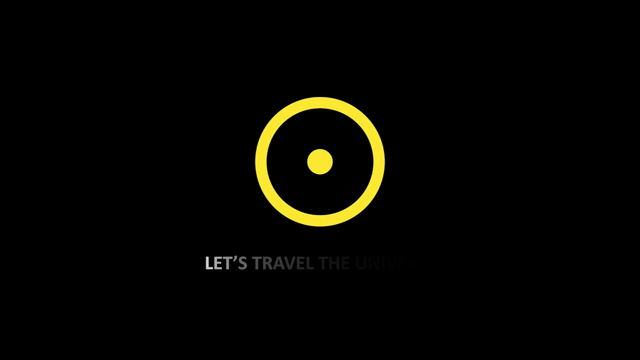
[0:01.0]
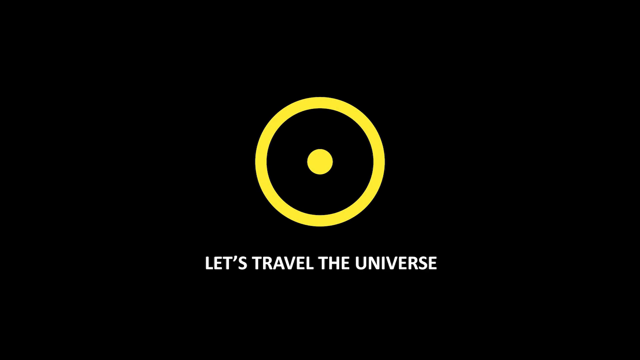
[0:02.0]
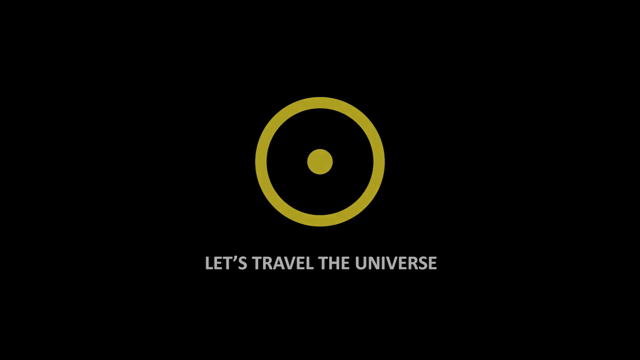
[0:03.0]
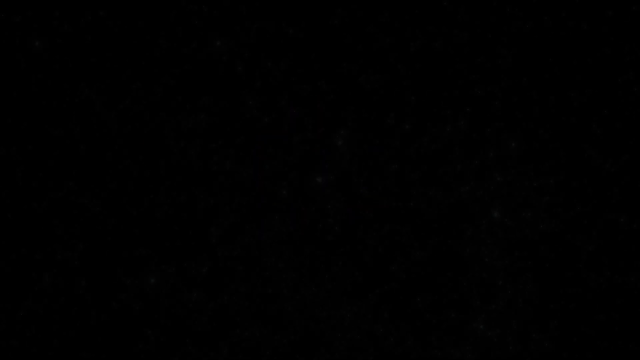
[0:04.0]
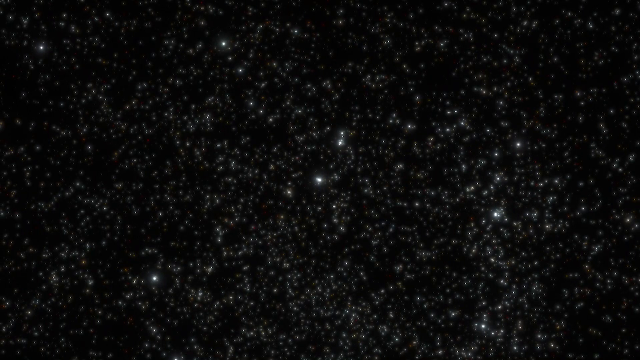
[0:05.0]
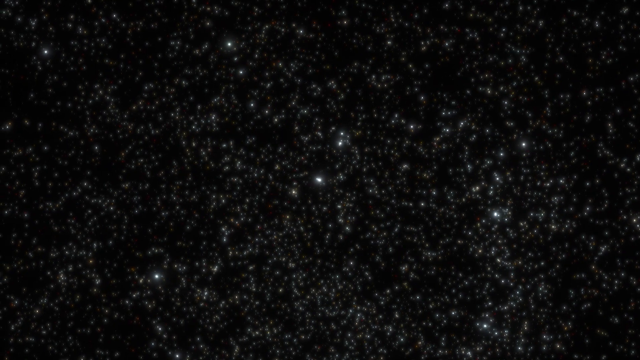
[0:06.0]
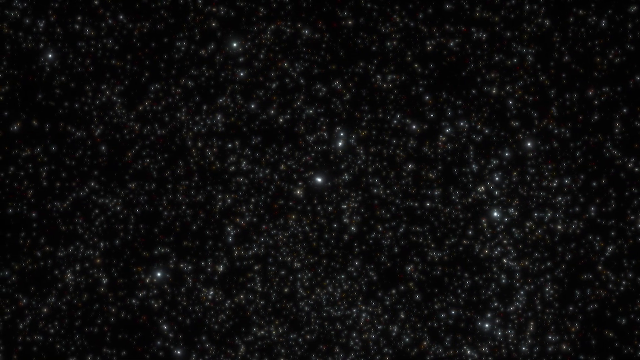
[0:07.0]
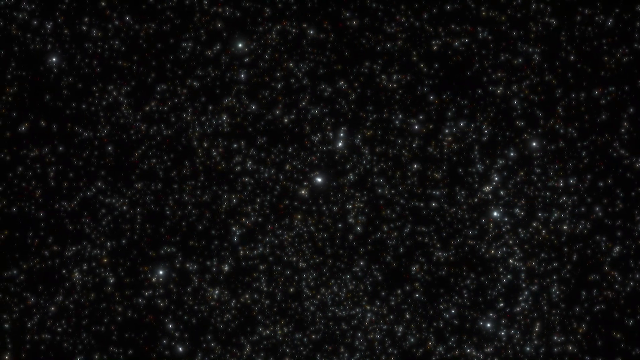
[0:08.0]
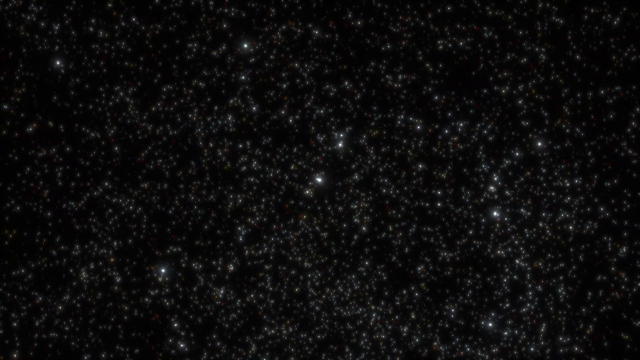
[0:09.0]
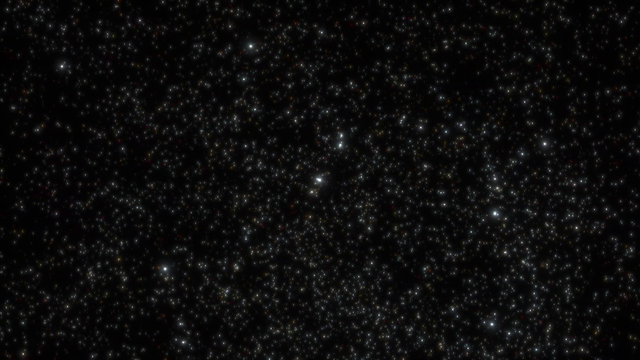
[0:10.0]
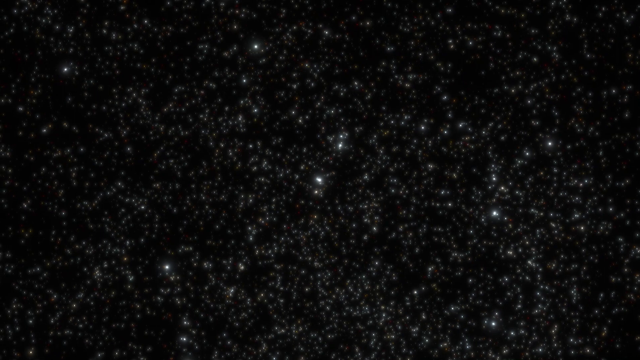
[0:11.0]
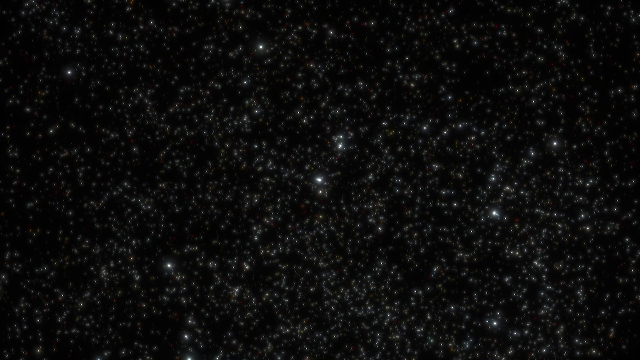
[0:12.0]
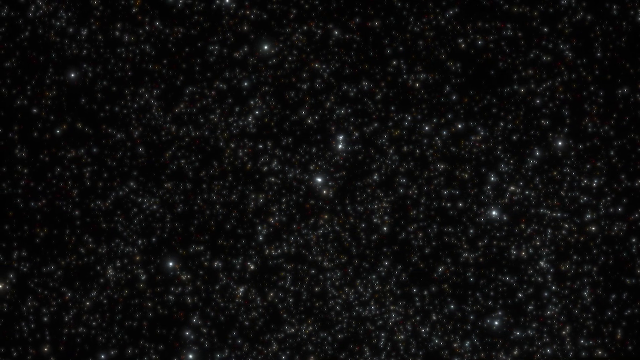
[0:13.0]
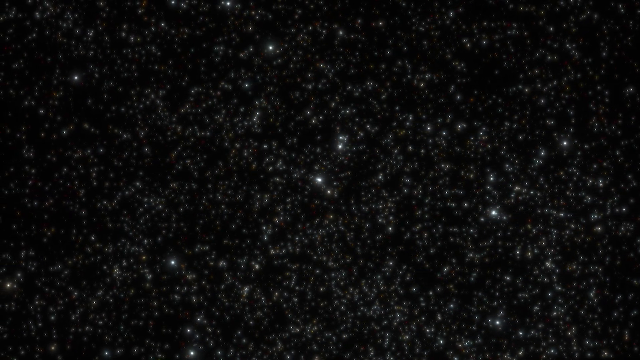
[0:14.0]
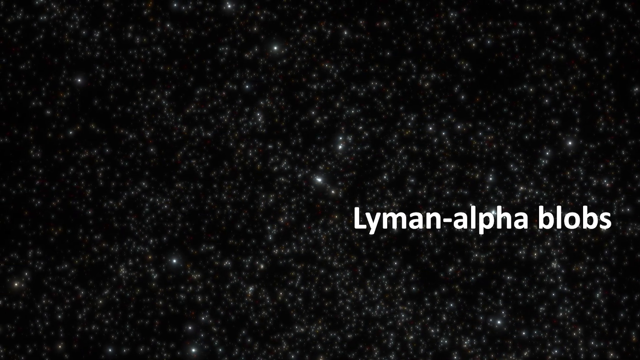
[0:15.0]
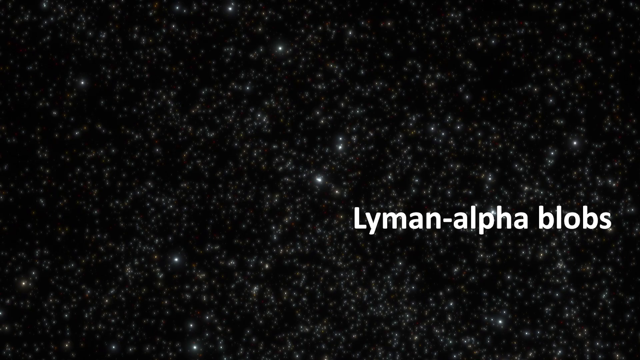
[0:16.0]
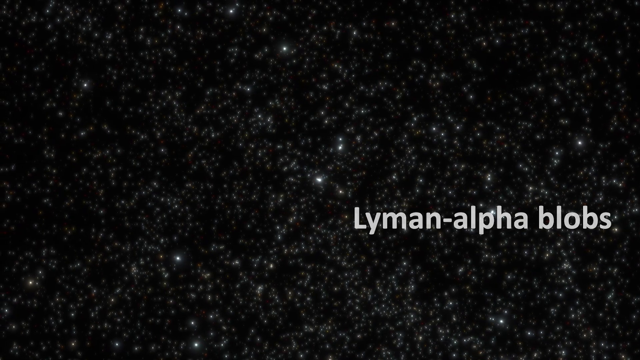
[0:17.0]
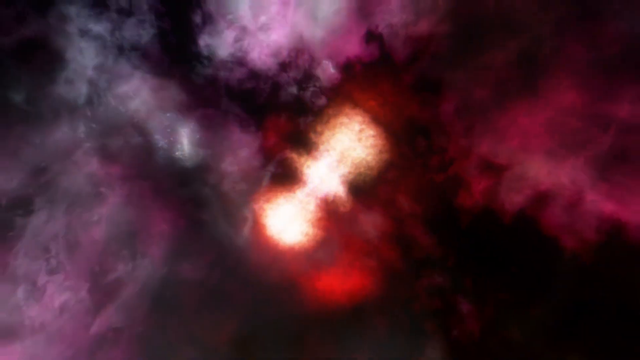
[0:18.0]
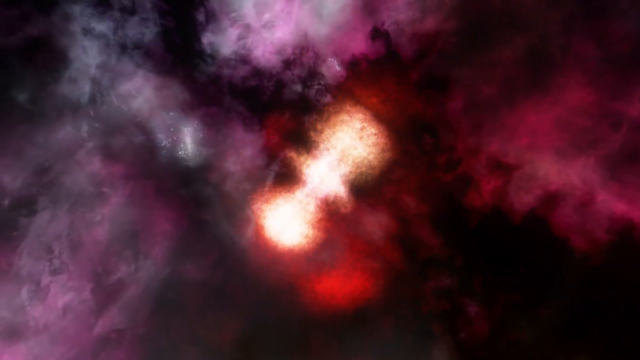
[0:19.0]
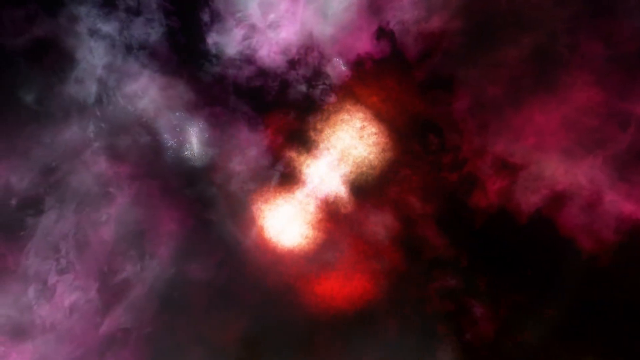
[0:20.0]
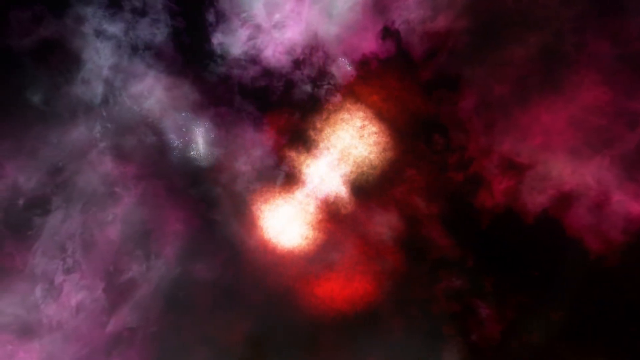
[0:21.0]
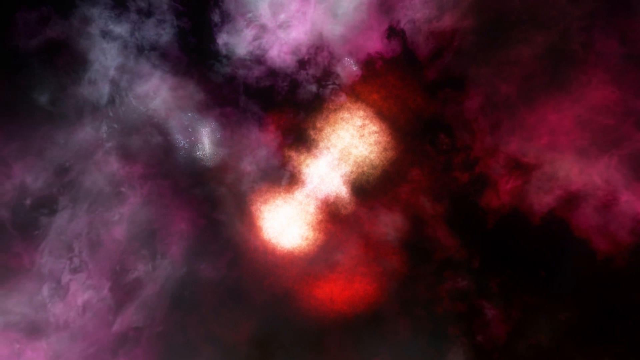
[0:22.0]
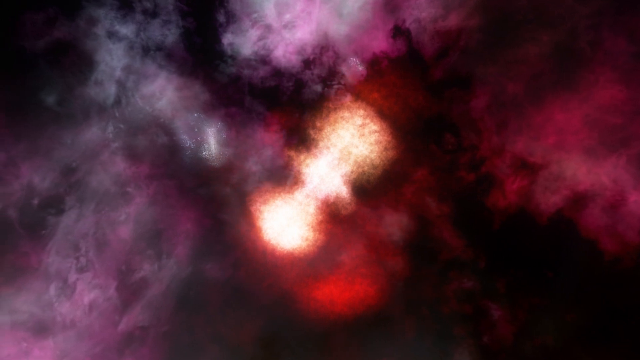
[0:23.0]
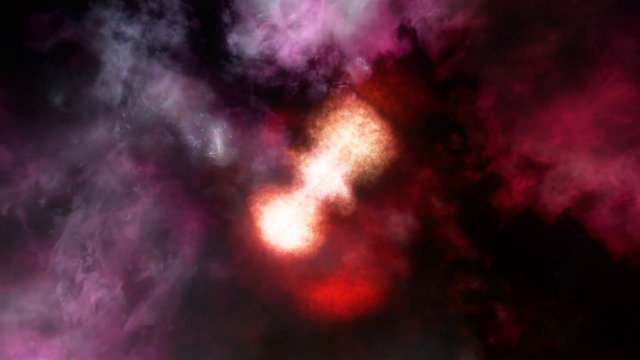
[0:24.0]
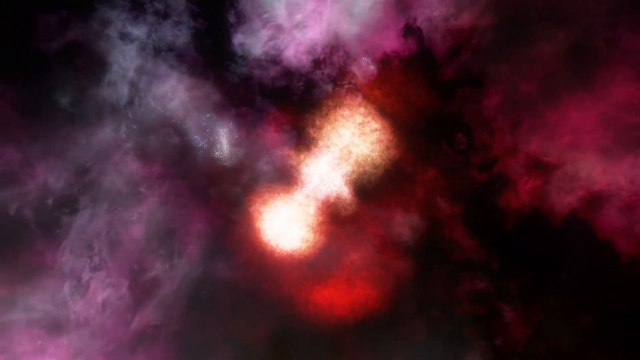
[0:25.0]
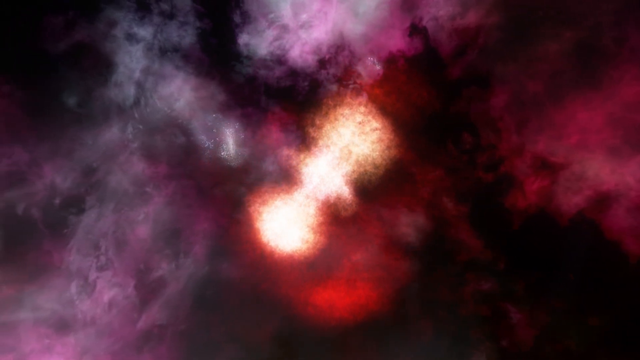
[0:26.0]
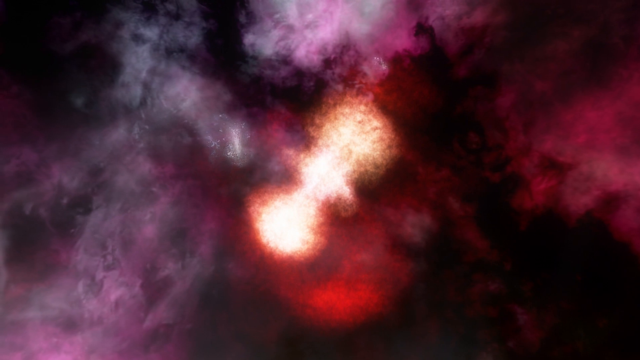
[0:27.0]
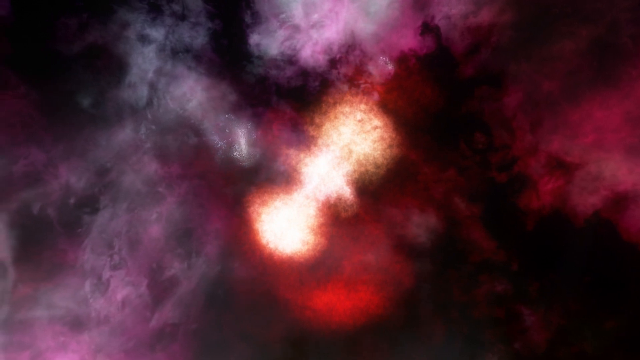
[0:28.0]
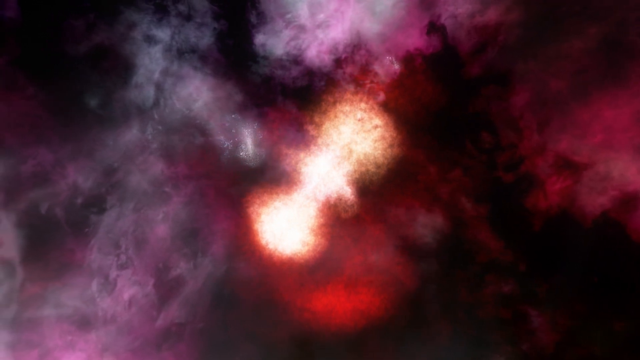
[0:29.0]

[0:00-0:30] The video opens with a yellow circle, and beneath it text reads "let's travel the universe." Next comes a scene that looks like deep space: black, but filled with white stars across the entire screen. Text slides in from the right reading "Lyman alpha blobs." The screen then changes to a red and orange, almost vase-like shape with purple and red nebulas on its outsides; the scene is no longer black but suddenly very colorful, almost tie-dye looking. It then cuts to another scene of space, mostly black, with a green star- or nebula-like body.